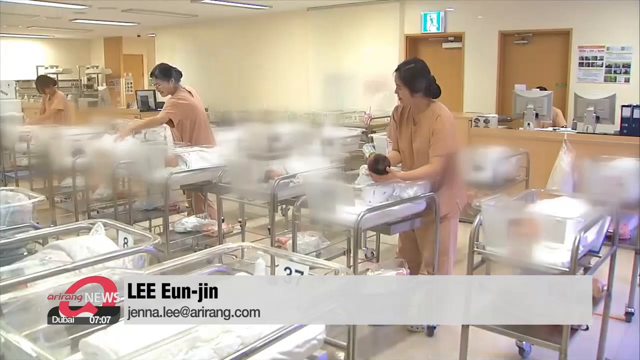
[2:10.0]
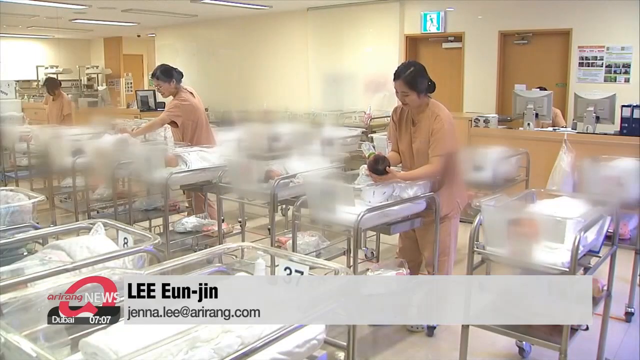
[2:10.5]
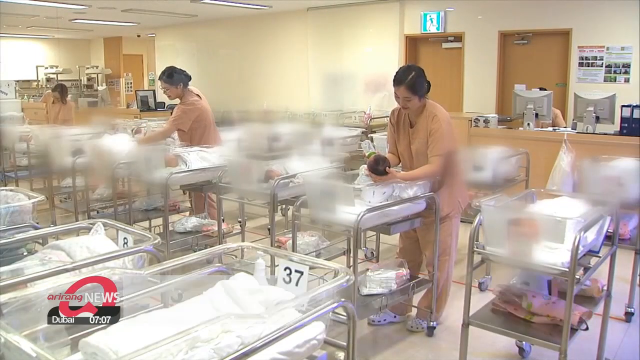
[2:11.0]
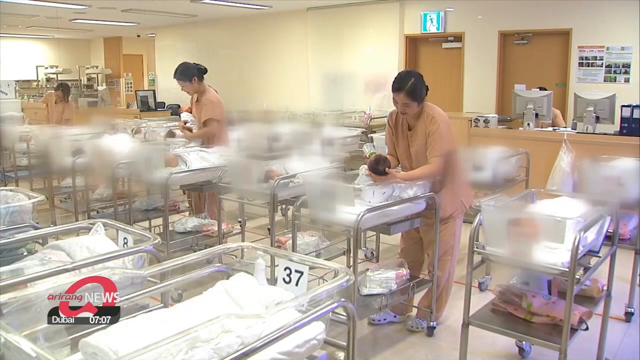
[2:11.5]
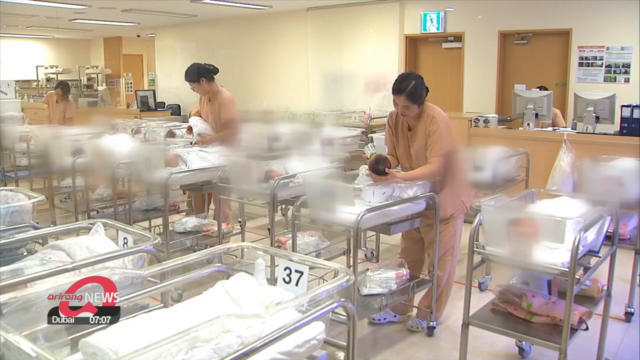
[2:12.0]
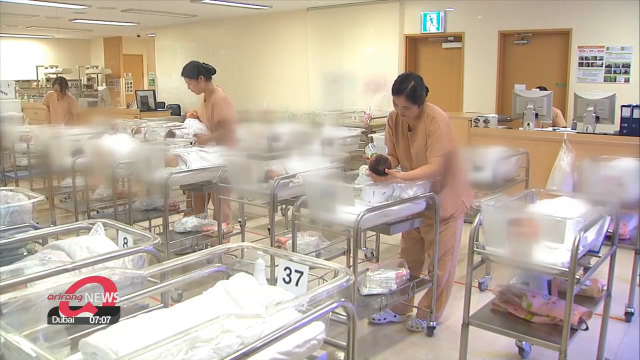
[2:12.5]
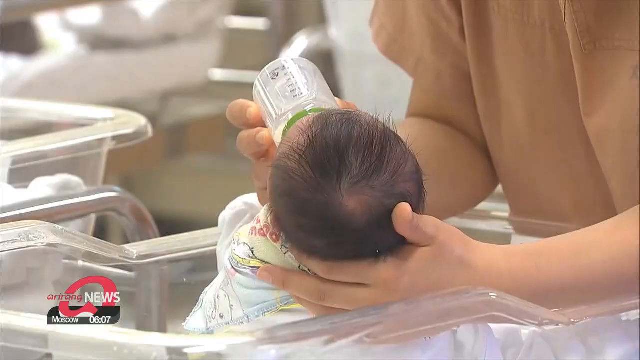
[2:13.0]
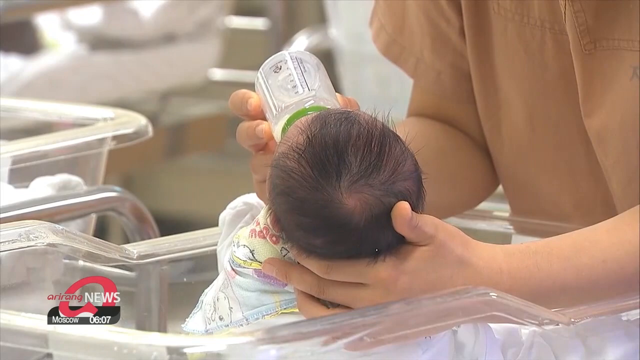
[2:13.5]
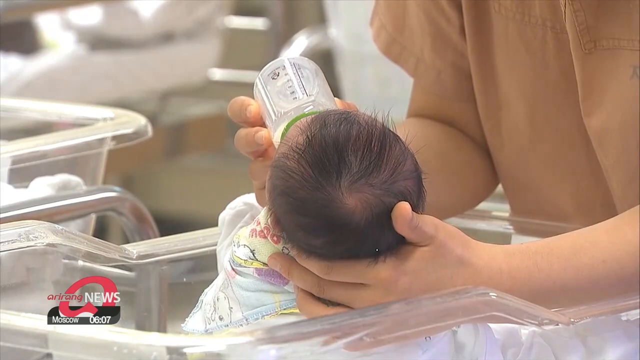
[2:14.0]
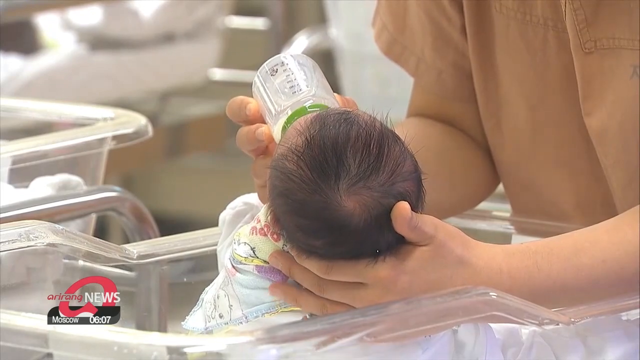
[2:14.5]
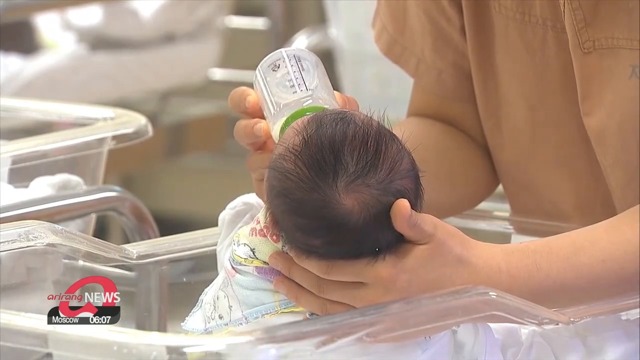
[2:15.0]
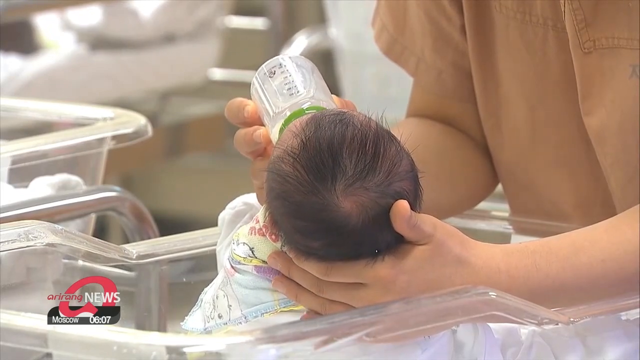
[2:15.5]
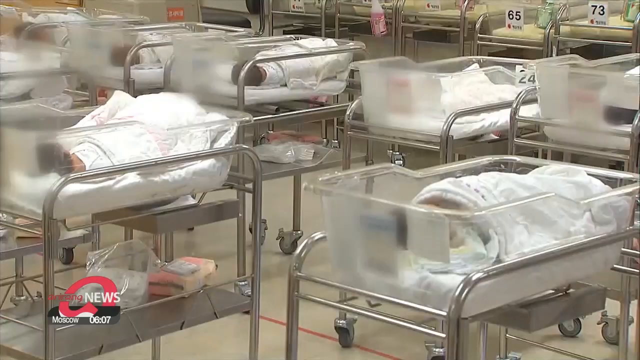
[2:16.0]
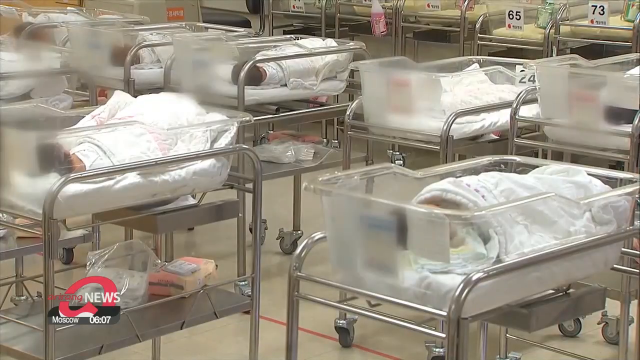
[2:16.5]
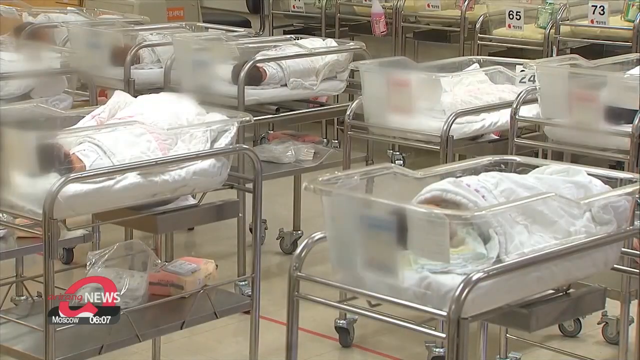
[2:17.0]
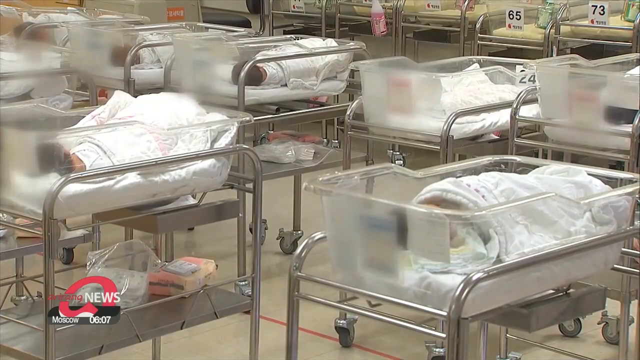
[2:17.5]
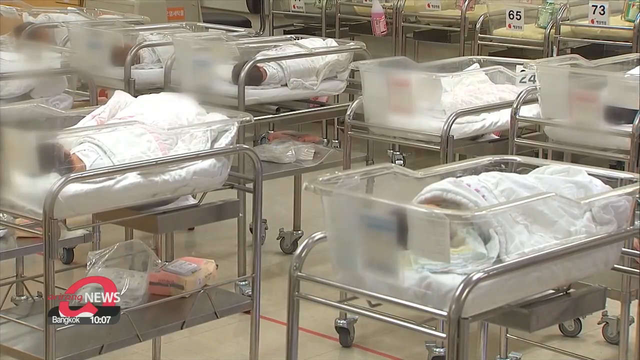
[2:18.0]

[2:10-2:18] A nurse in brown scrubs feeds a newborn from a bottle, not holding the baby up but just holding up his head, almost as if cradling him. More shots show the different newborns in the facility, all sleeping. A wider shot shows the newborns in their incubator bins, with numbers on the sides of the bins along the far wall, including 65, 73 and 124. The babies are bundled in white blankets, all facing the same way, and below them is a tray that looks like it holds some equipment or a change of sheets, apparently things wrapped in plastic. The bins are laid side by side, usually grouped in twos with a little space between them.